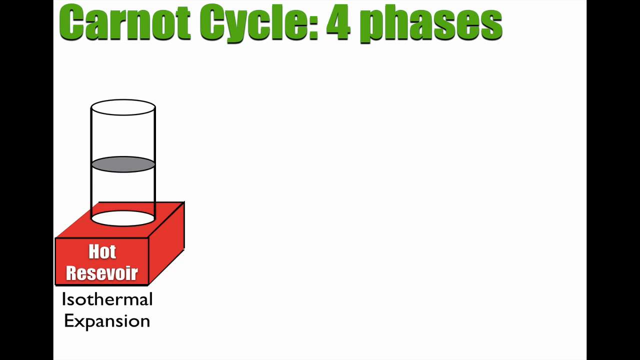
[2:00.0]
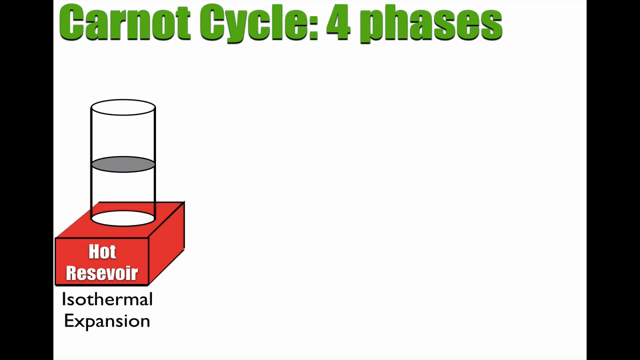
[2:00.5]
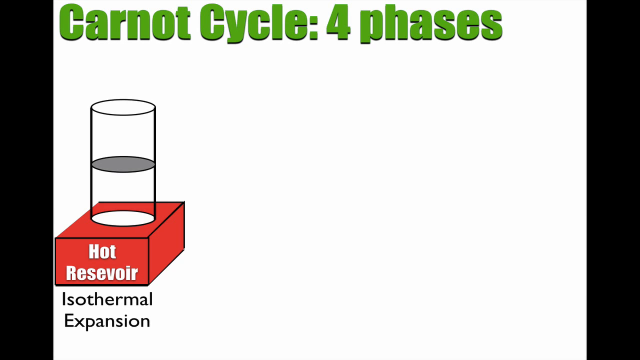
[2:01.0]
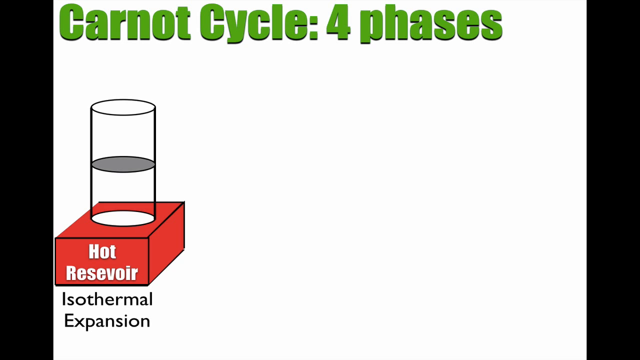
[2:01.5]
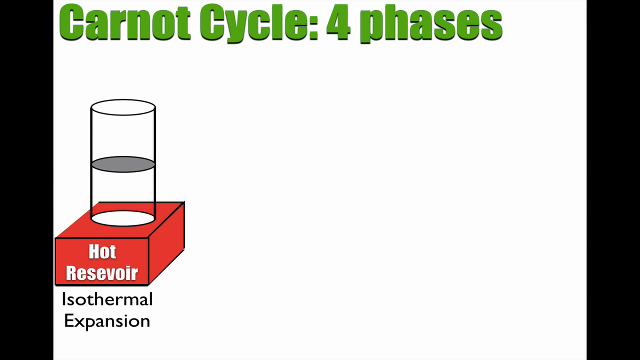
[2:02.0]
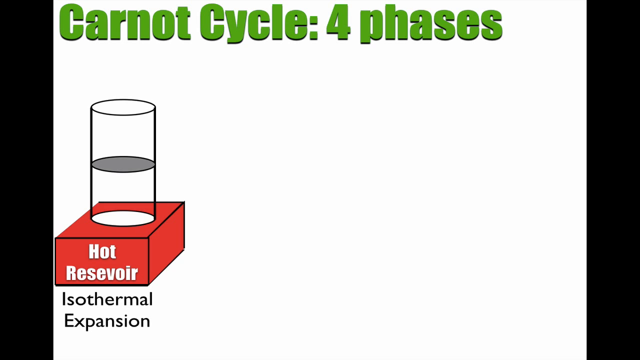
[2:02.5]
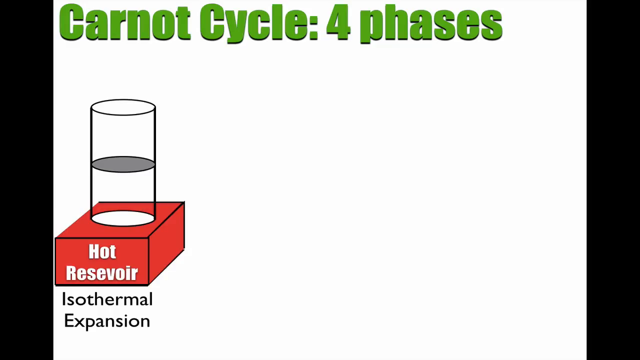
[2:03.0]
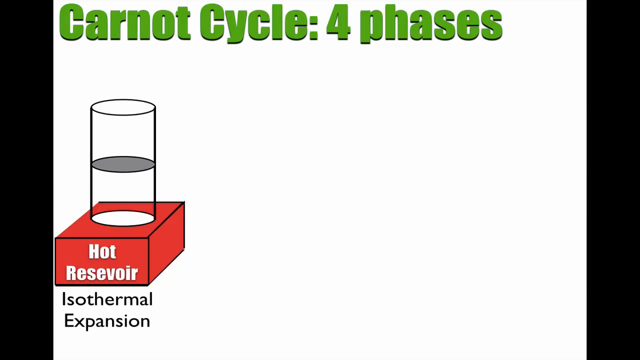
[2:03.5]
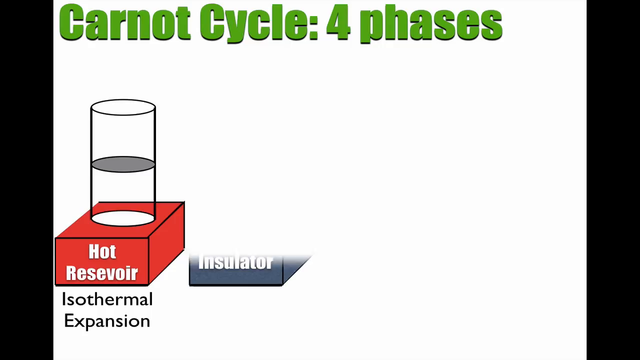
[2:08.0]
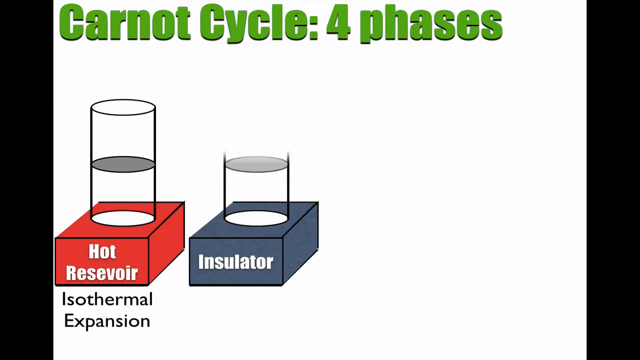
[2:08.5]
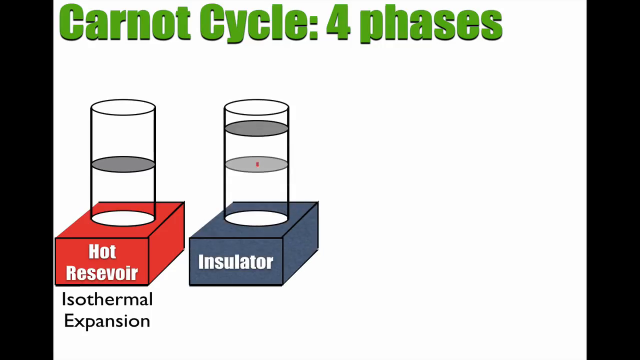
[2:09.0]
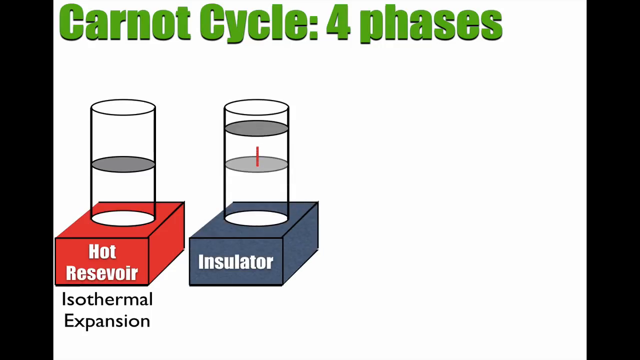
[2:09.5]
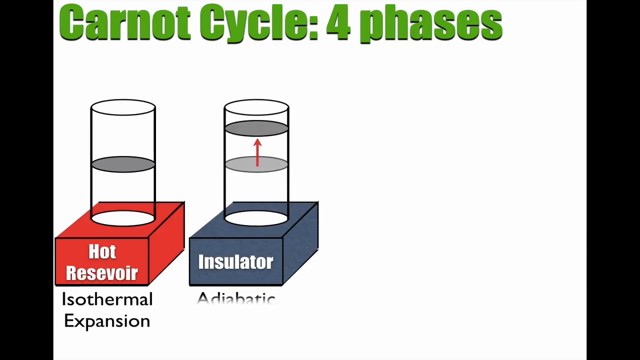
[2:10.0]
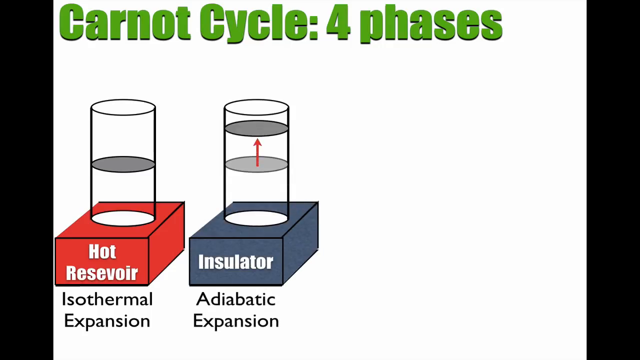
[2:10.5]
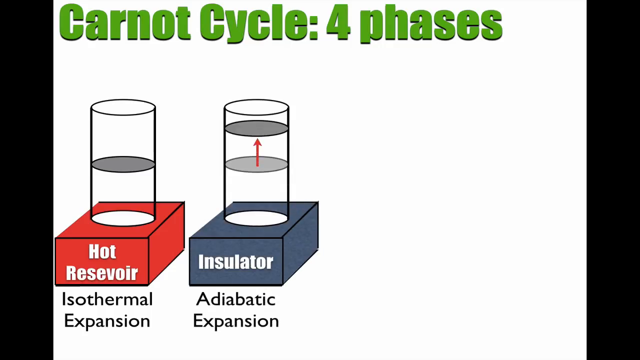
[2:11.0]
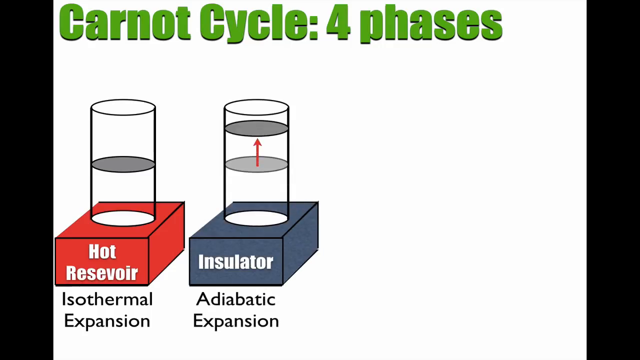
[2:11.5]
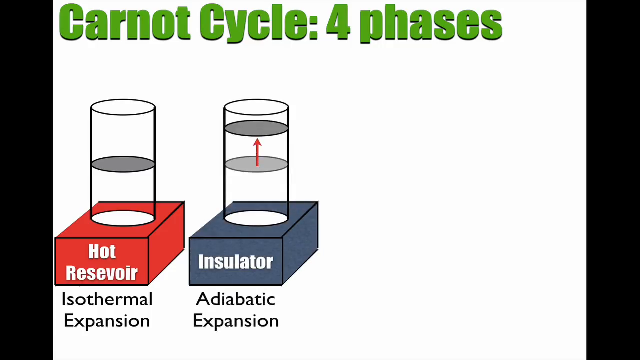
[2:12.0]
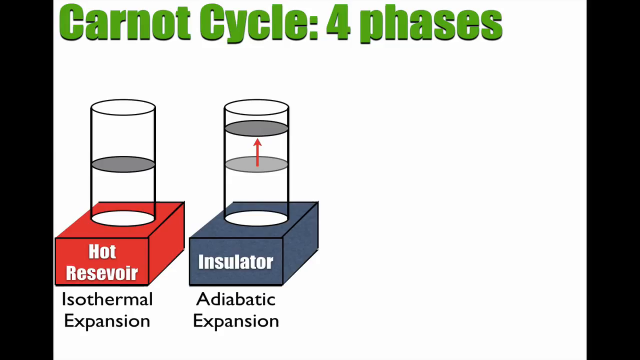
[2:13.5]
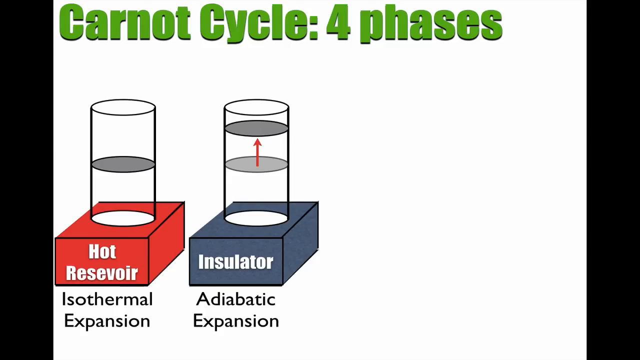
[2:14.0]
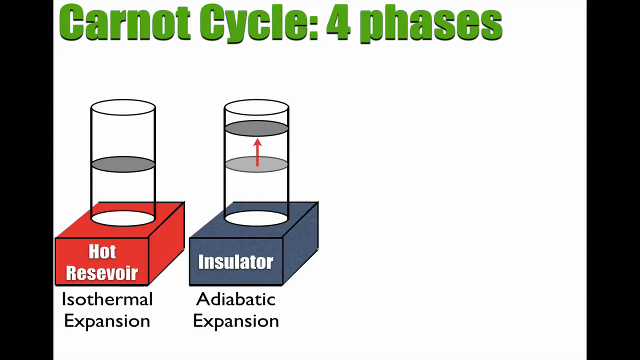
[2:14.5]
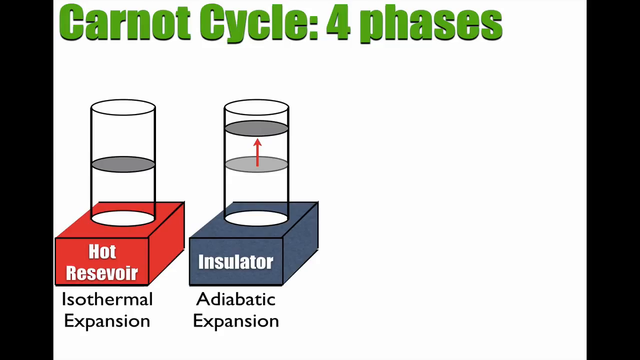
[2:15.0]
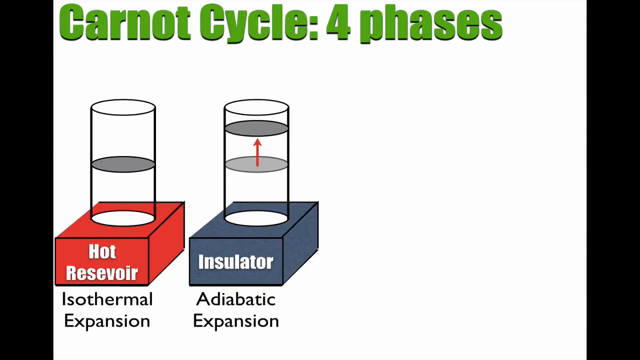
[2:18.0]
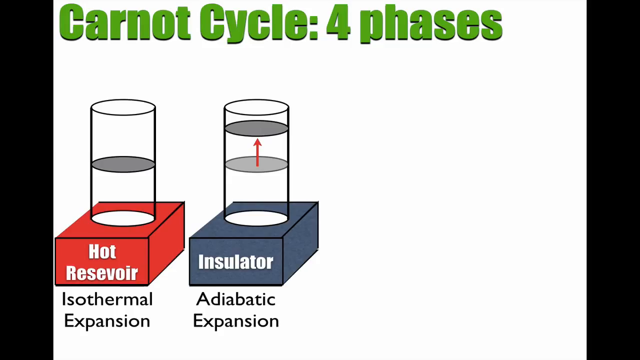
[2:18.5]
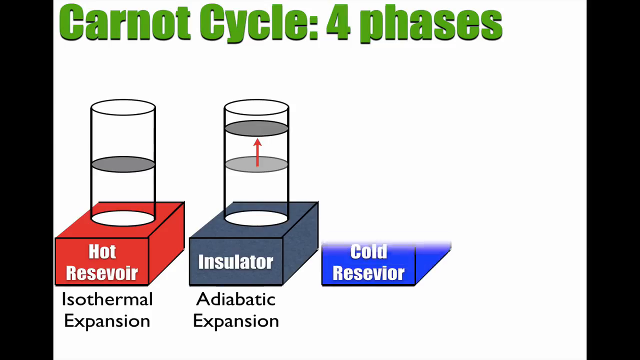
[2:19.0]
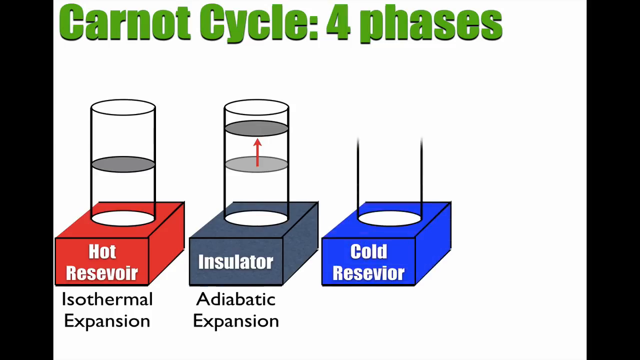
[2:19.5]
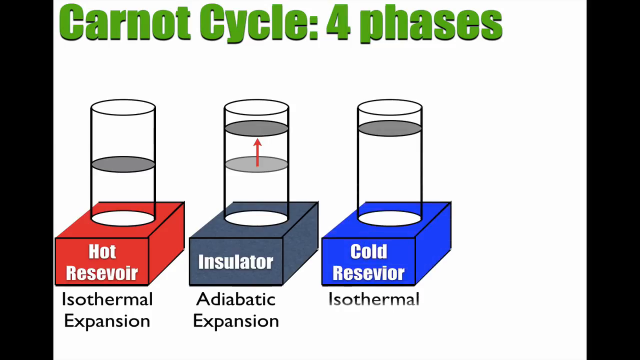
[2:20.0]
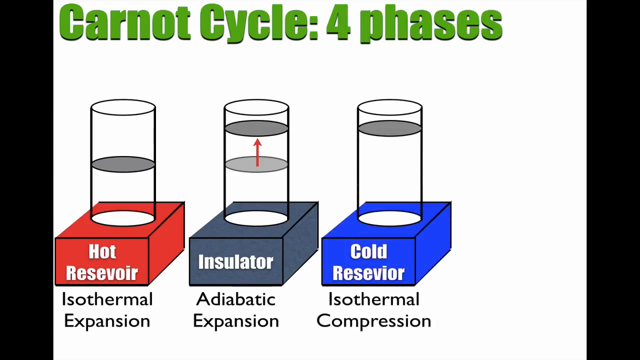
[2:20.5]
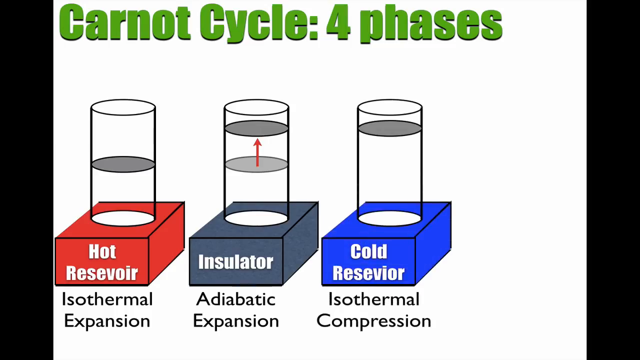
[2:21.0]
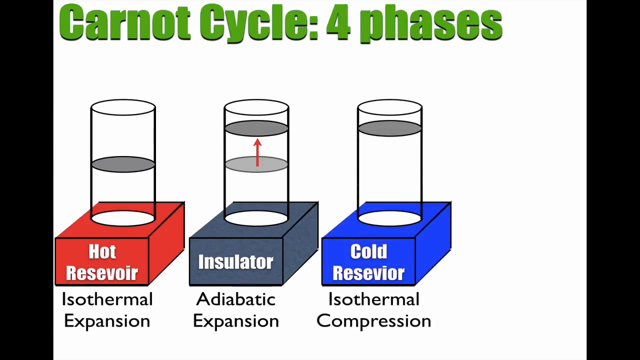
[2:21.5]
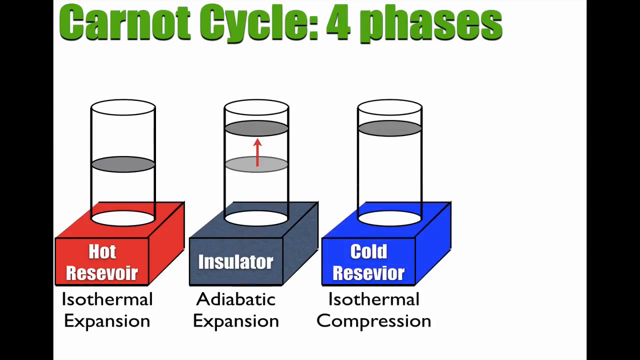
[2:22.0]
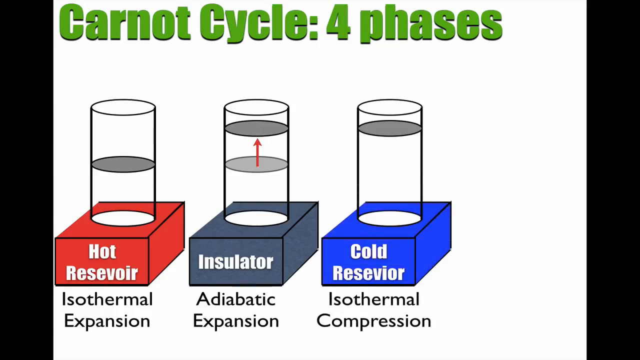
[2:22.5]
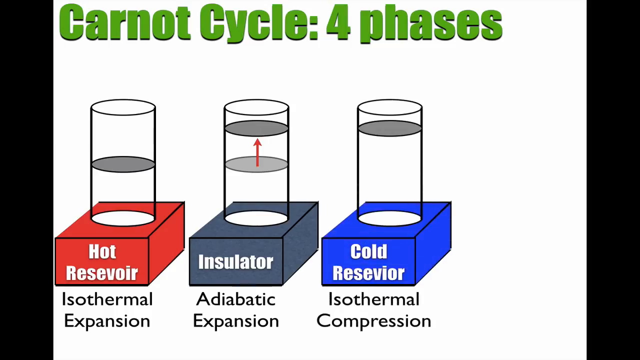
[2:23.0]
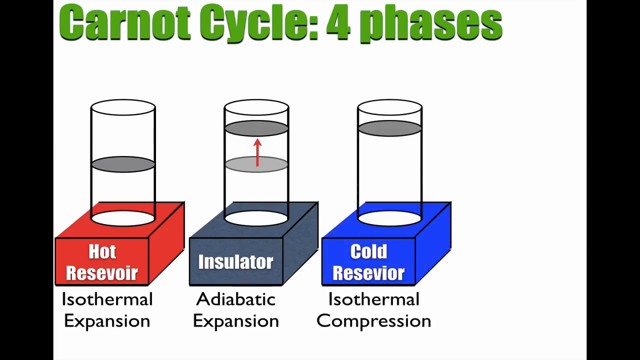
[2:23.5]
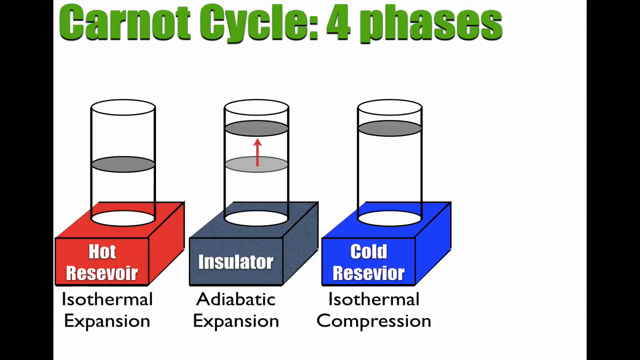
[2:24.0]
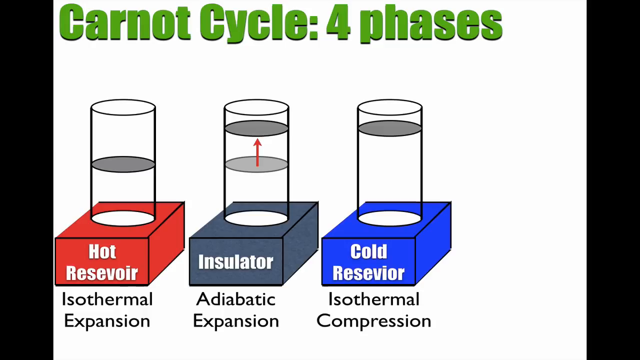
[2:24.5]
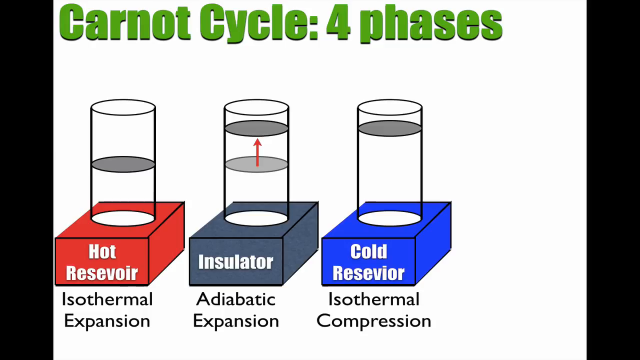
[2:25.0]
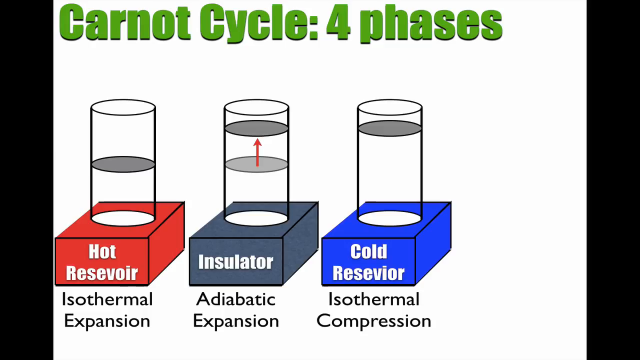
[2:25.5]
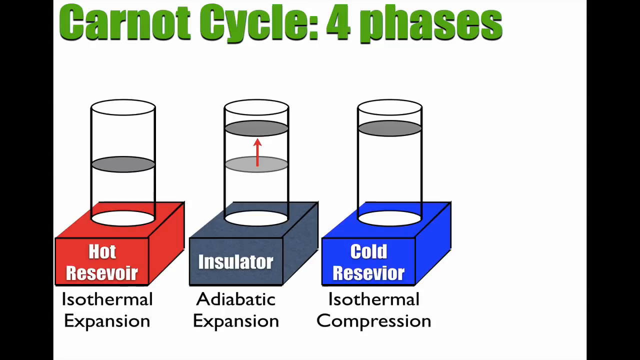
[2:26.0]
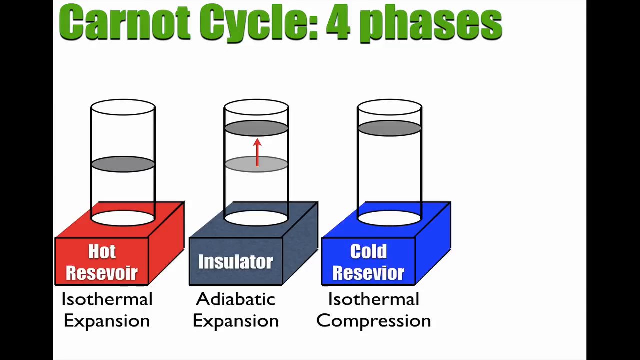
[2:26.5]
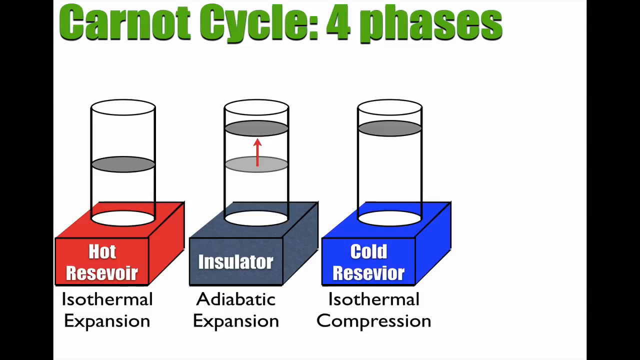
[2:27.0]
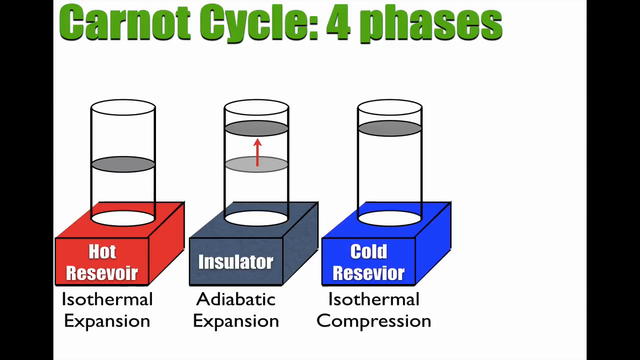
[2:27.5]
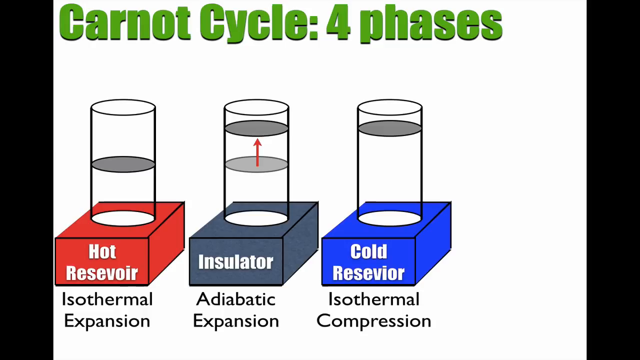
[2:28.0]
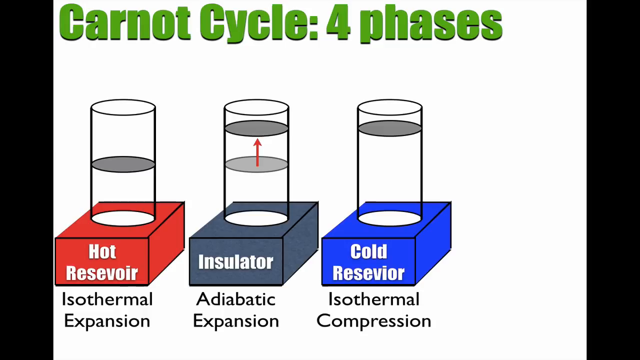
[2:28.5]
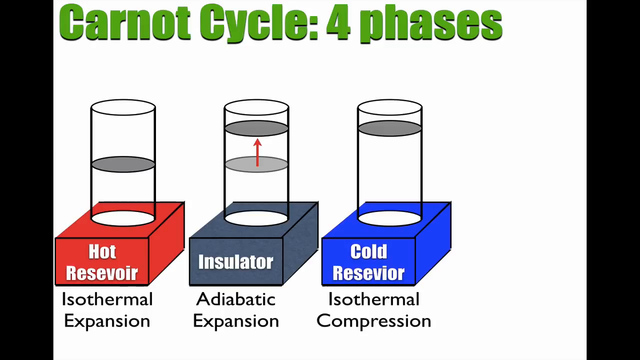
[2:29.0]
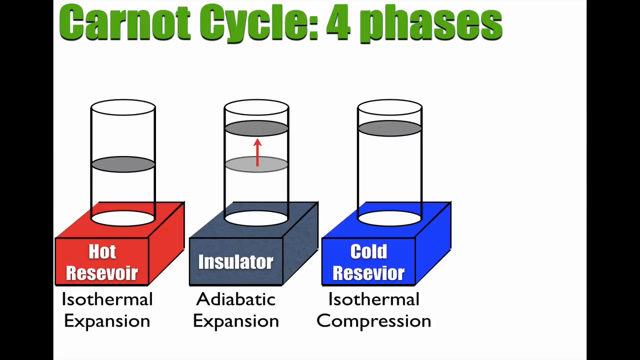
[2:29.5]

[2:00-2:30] For a moment nothing happens on the white screen. Then a second diagram appears next to the hot reservoir diagram. It has the same container shape at the bottom, marked "insulator" on the front, and four areas in its tube: a white circle at the bottom, a light gray area about halfway, a darker gray area towards the top, and a white circle indicating an exit, with an arrow pointing between the two gray areas. Text underneath reads "adiabatic expansion". A third diagram then appears with the text "isothermal compression" at the bottom; its container has the text cold reservoir, apparently misspelled. The tube leading out of the cold reservoir has three circles: one at the bottom at the exit of the container, one at the top at the end of the tube, and a dark gray one at a similar level to the previous diagram's.